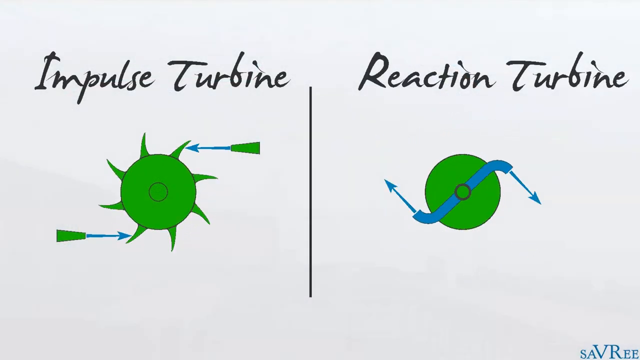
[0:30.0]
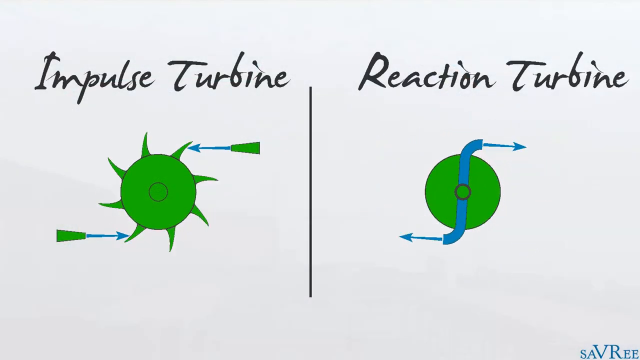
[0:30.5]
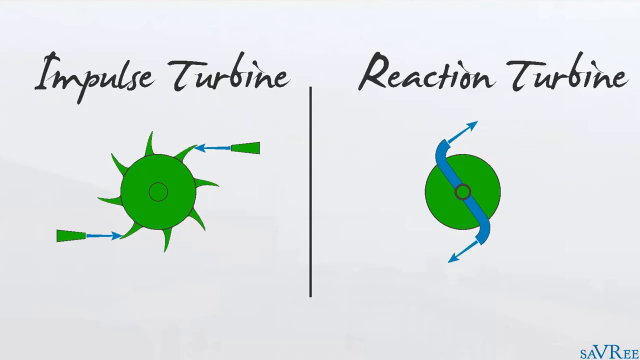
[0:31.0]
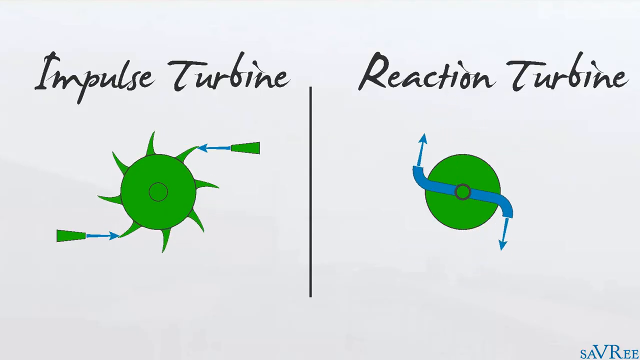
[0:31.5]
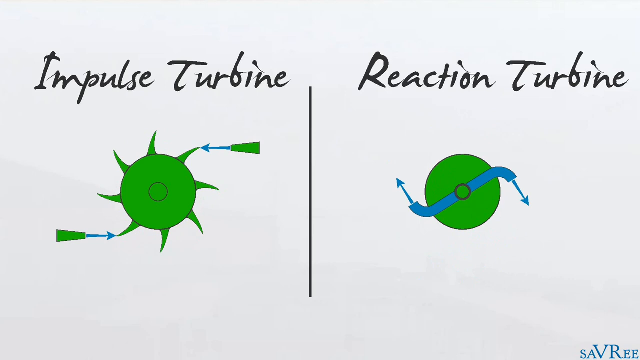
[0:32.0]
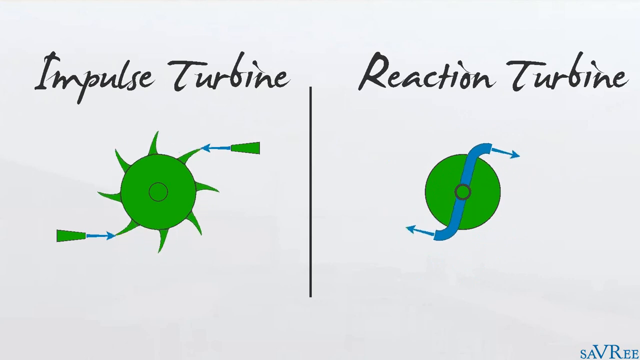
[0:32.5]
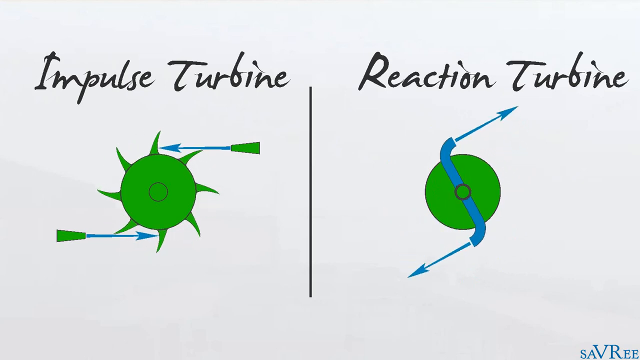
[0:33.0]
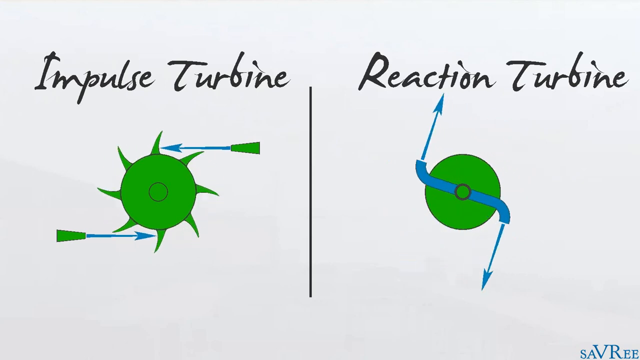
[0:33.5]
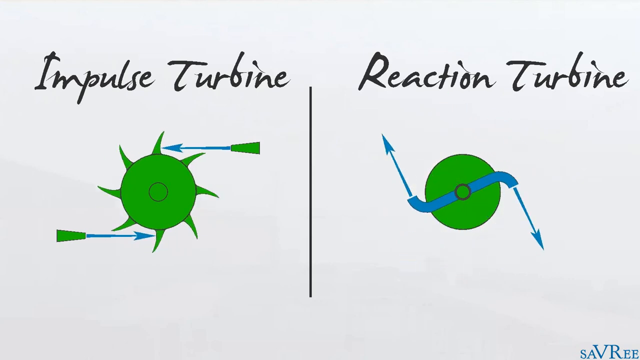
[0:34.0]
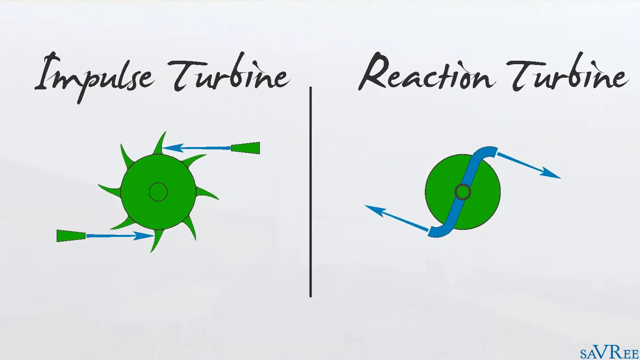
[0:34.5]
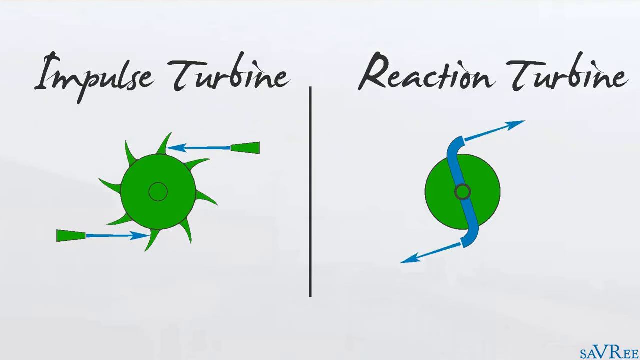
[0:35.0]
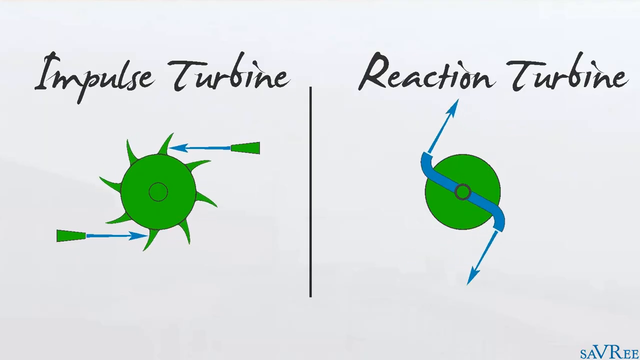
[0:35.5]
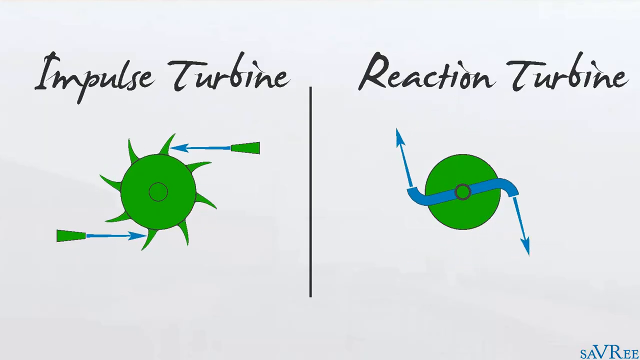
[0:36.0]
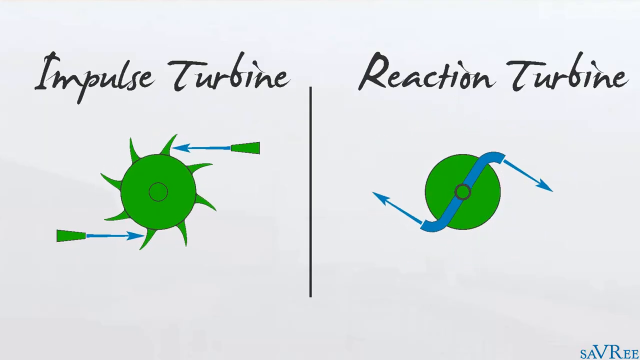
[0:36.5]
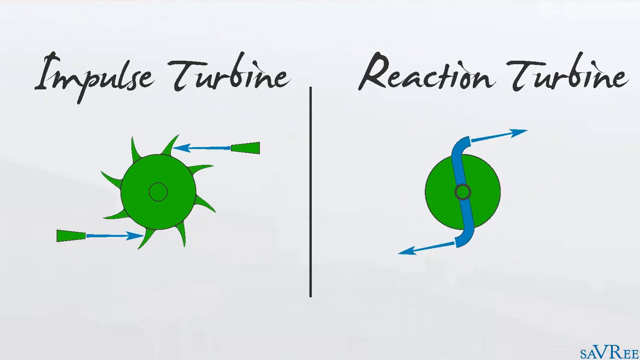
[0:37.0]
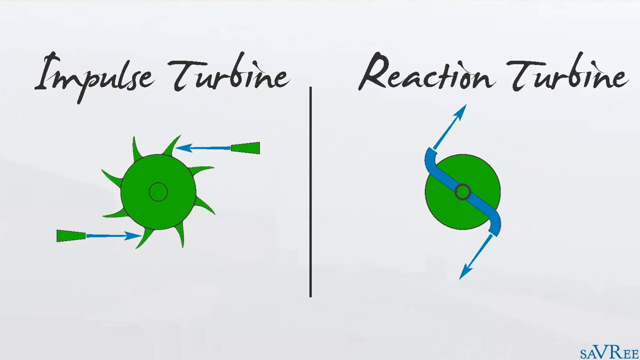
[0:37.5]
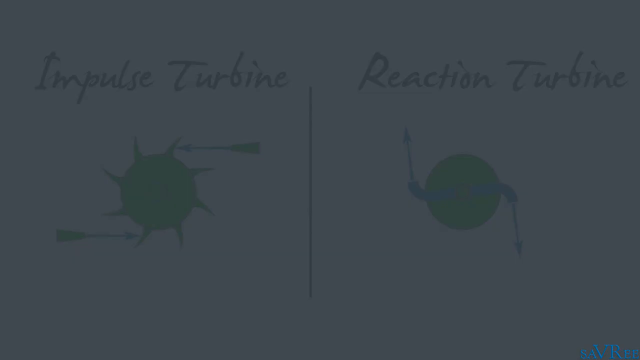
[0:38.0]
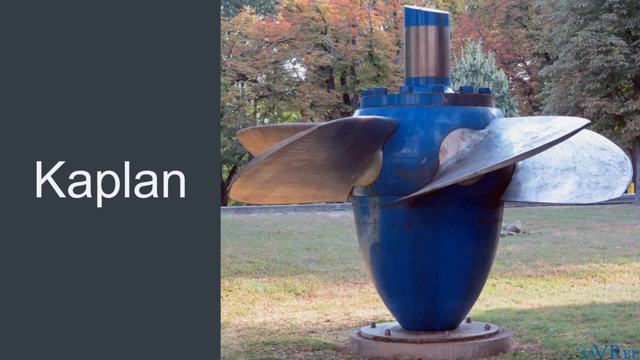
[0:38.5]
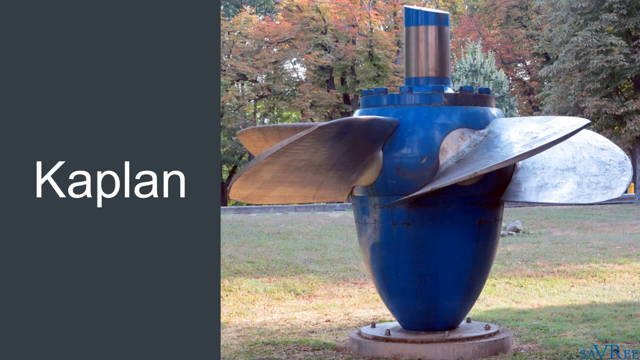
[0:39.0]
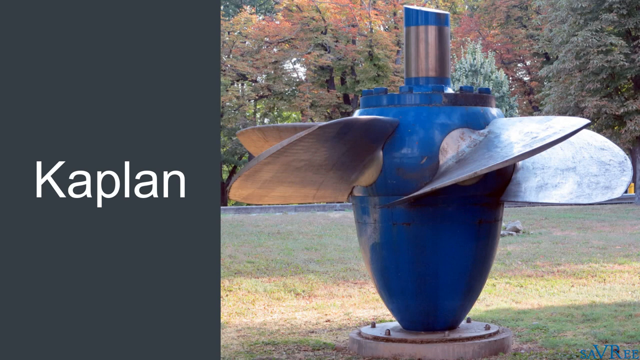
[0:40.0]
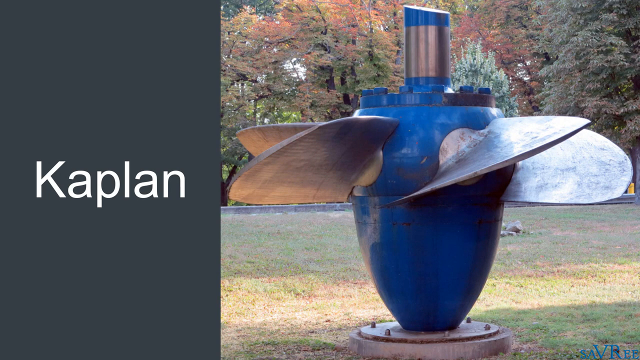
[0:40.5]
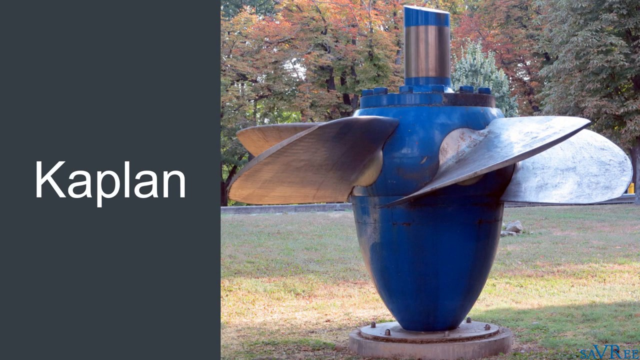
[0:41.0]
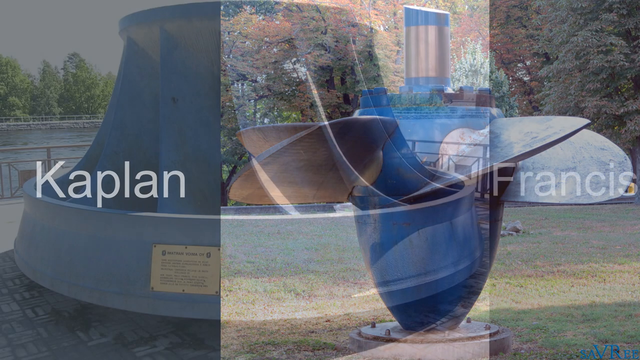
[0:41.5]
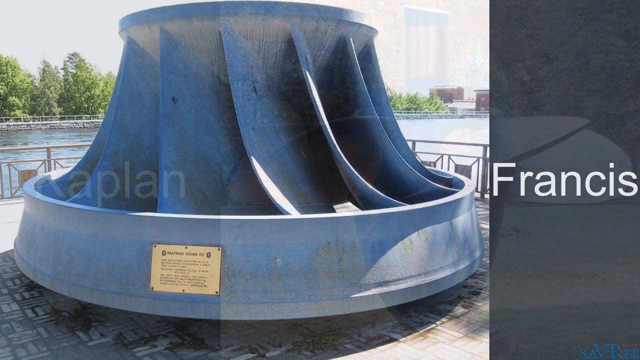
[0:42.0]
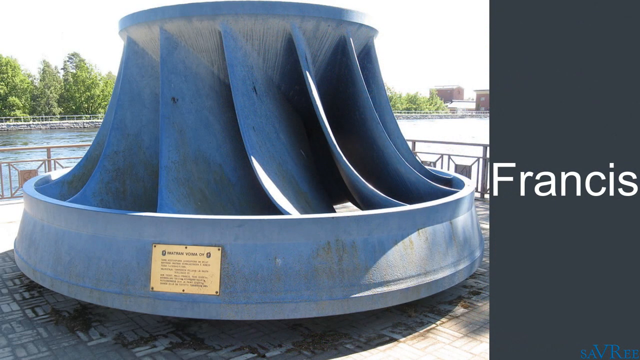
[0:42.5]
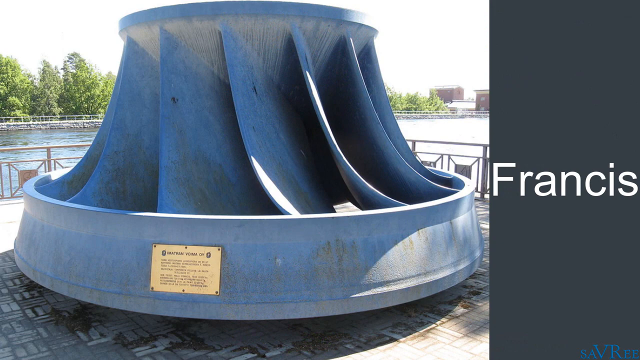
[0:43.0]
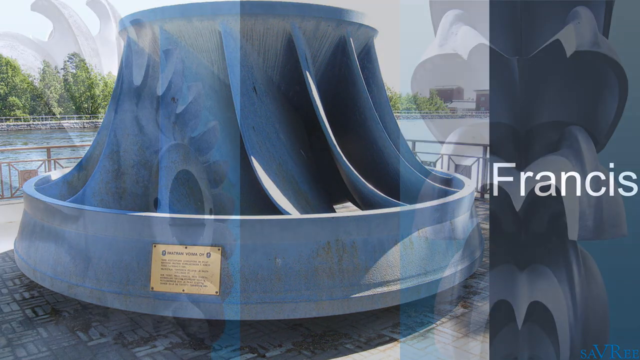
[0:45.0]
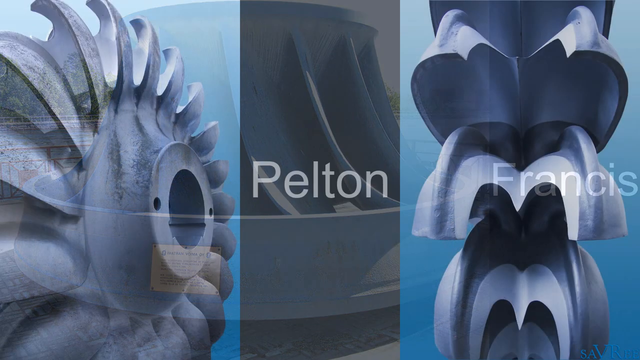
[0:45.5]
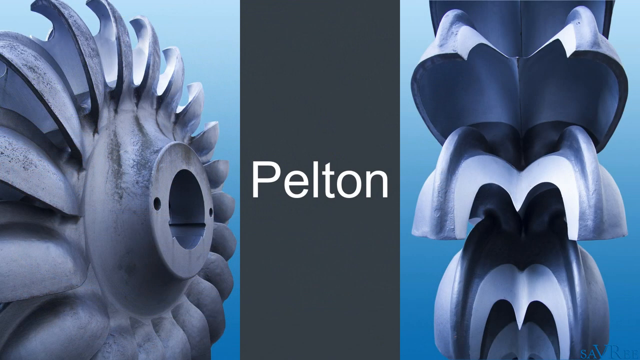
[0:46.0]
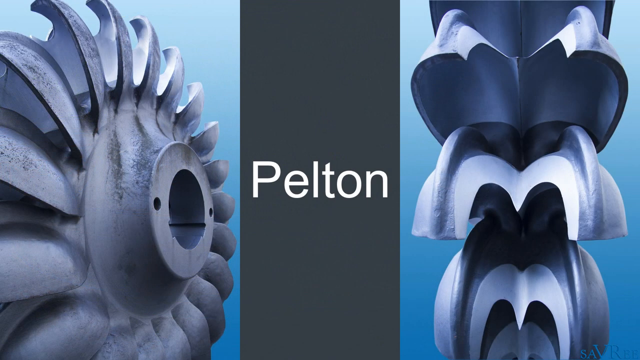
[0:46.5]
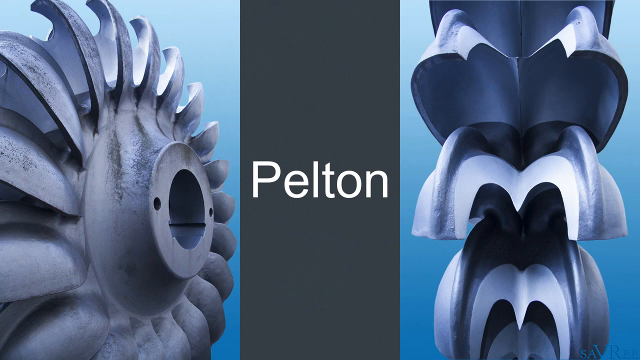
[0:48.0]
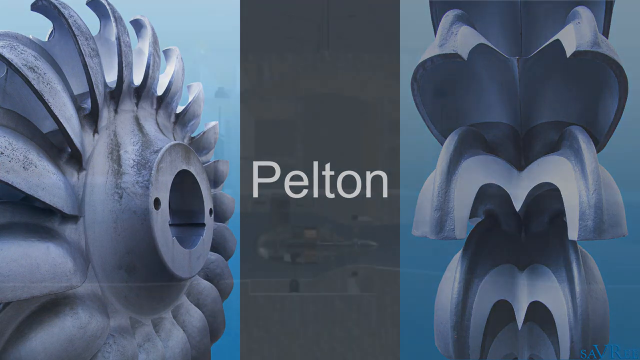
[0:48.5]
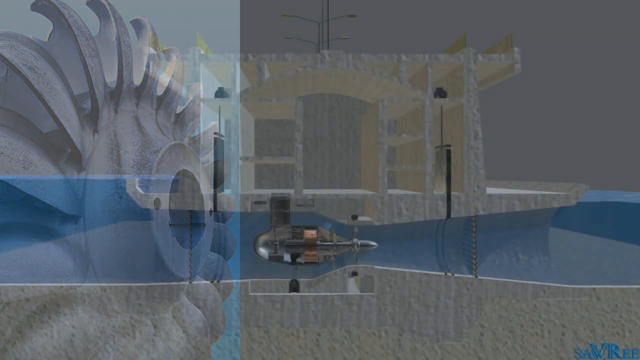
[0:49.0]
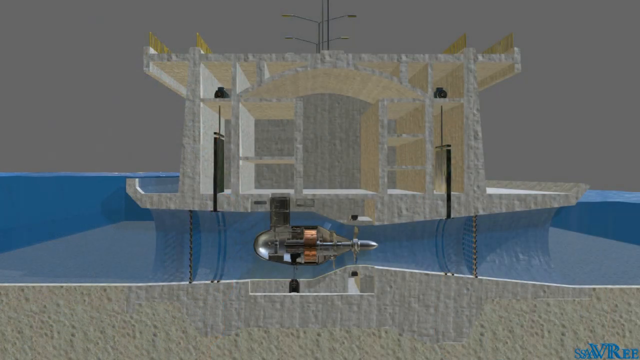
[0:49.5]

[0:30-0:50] The infographic of the impulse turbine and reaction turbine continues, with a little animation of arrows showing the directions in which some of the turbines move. The screen slowly fades out to another sort of turbine or propeller, kind of blue, named Kaplan, on a kind of gray background. It then transitions to another propeller turbine named Francis, and then to more turbines and light structures named Pelopon. Next comes kind of an infographic with a concrete-looking structure, potentially showing how to properly set up one of these turbines or machines. No physical subjects are shown; the video transitions between screens showing the turbines and their names.